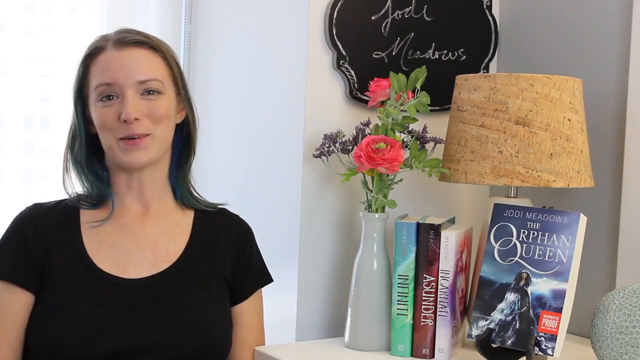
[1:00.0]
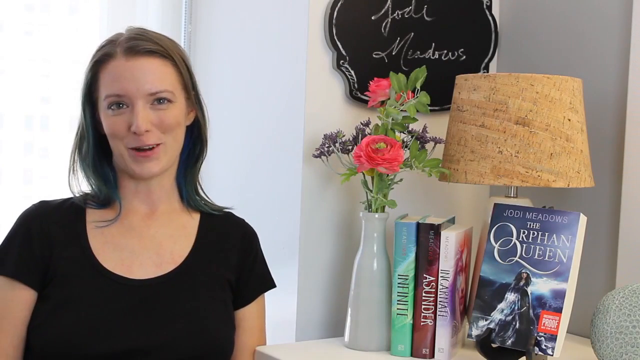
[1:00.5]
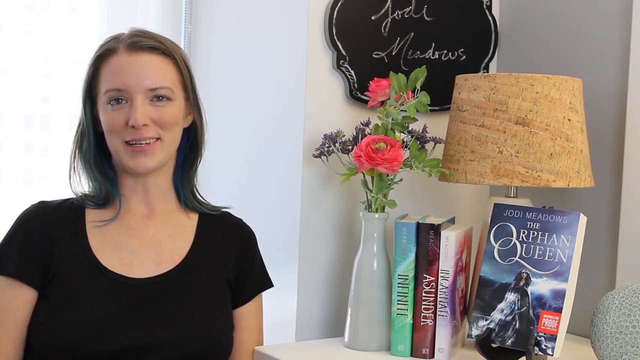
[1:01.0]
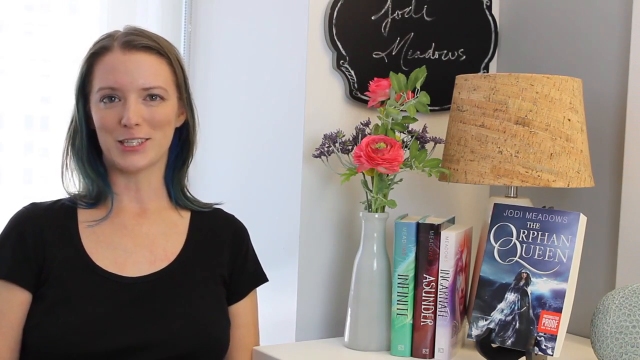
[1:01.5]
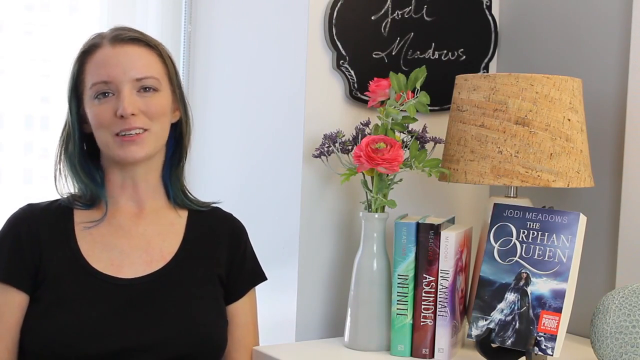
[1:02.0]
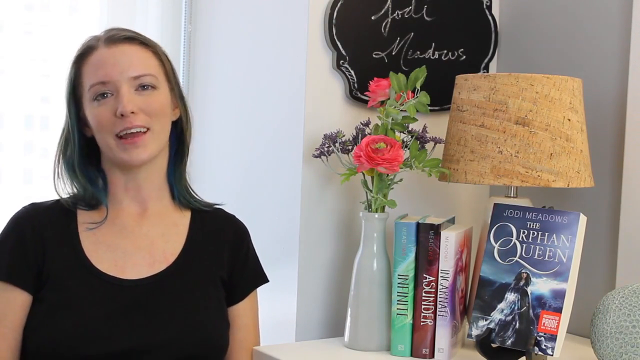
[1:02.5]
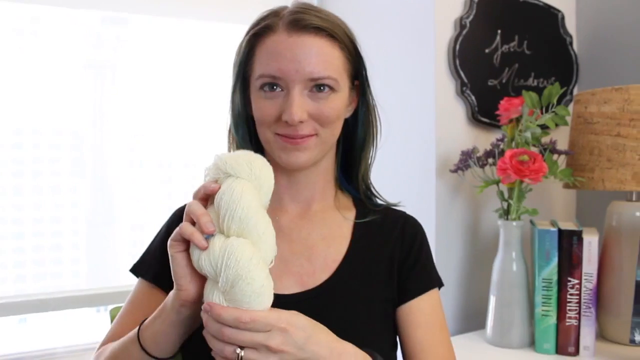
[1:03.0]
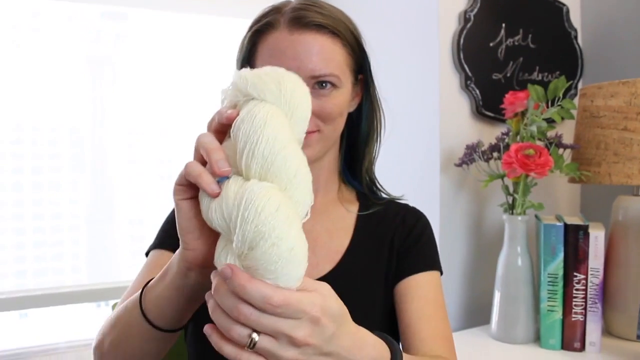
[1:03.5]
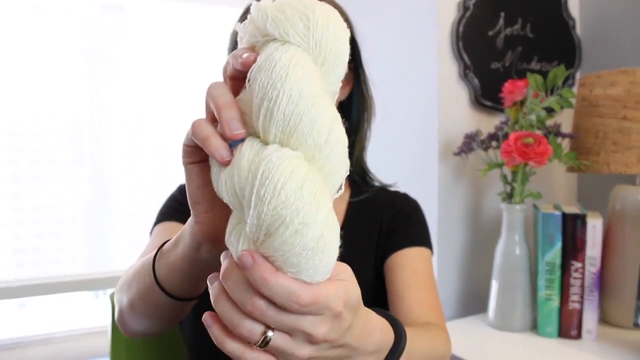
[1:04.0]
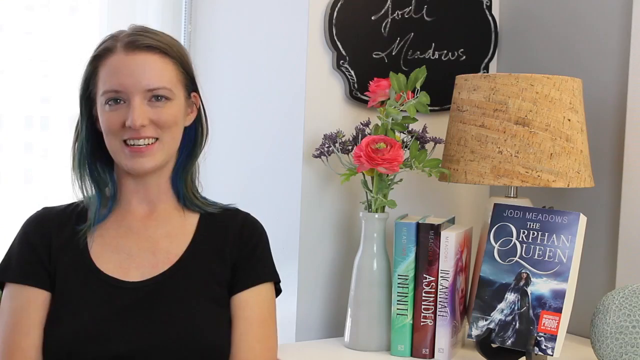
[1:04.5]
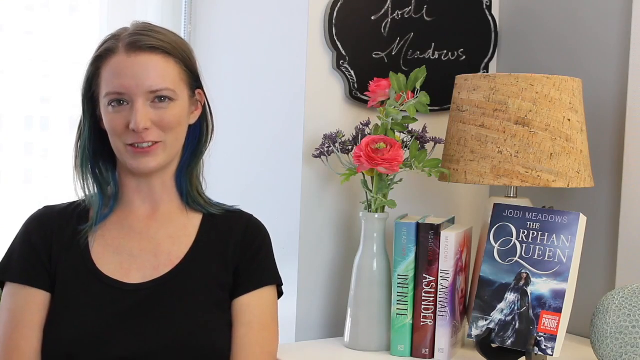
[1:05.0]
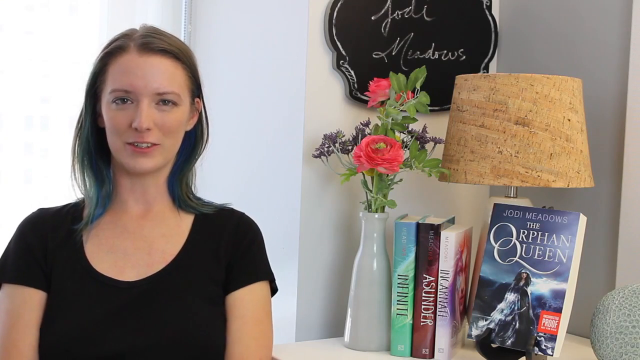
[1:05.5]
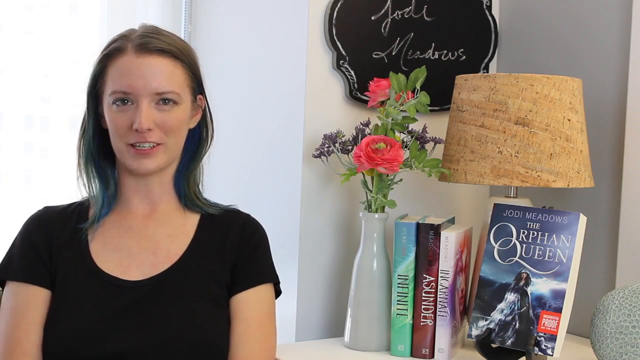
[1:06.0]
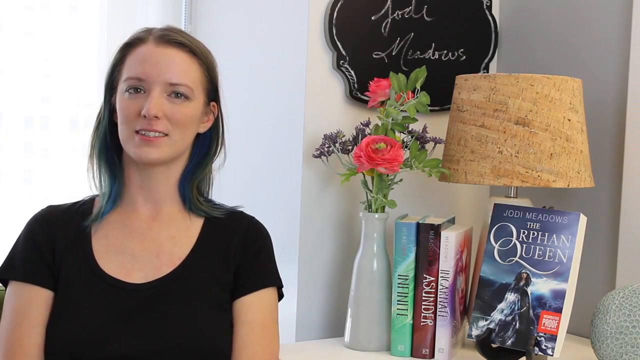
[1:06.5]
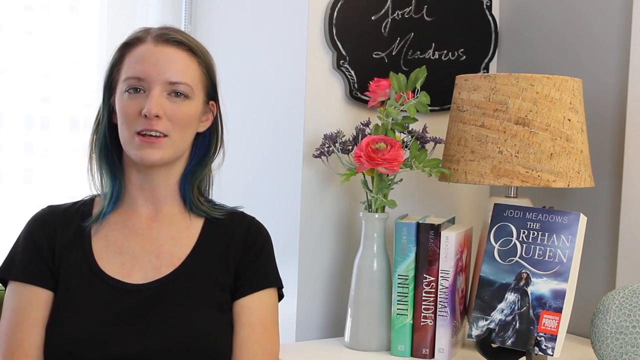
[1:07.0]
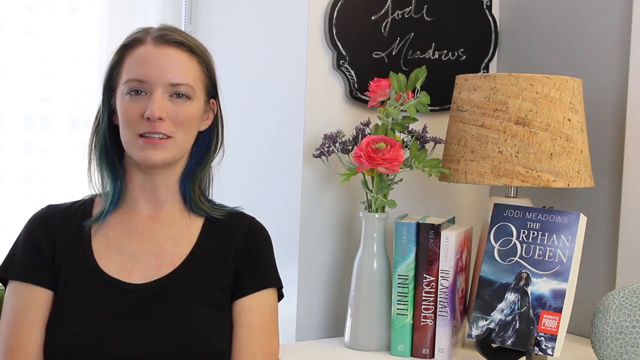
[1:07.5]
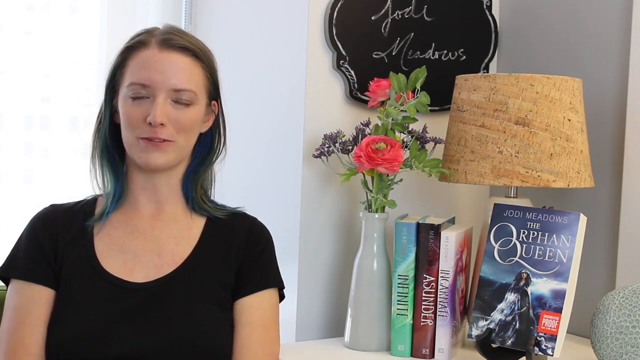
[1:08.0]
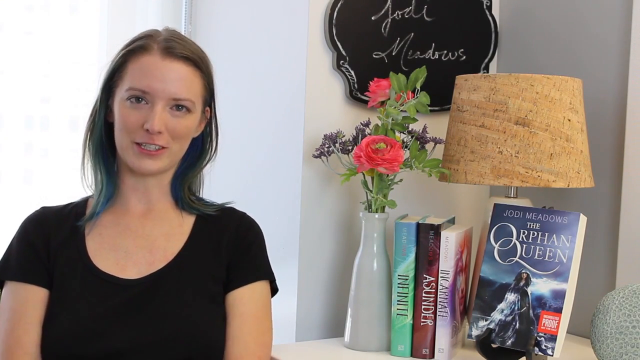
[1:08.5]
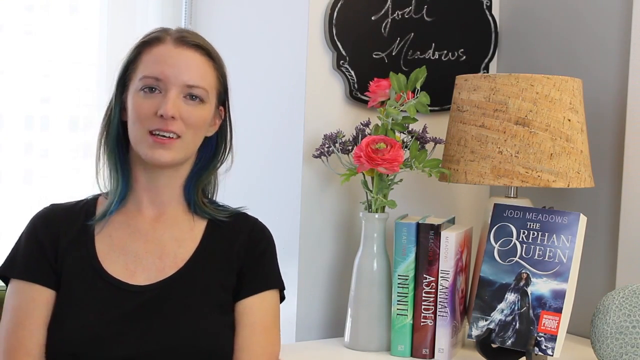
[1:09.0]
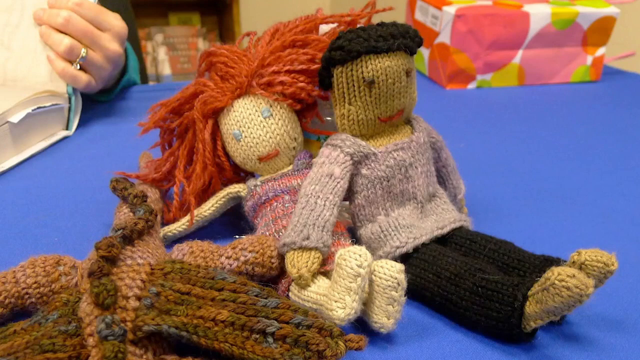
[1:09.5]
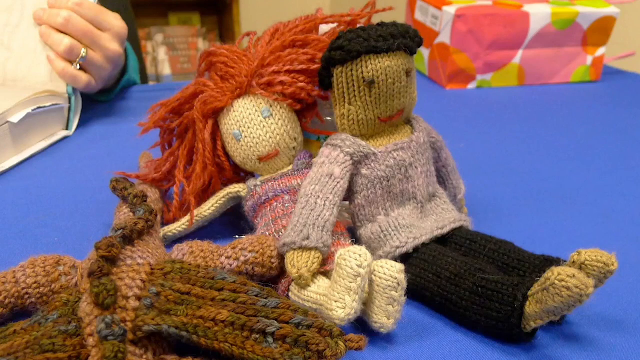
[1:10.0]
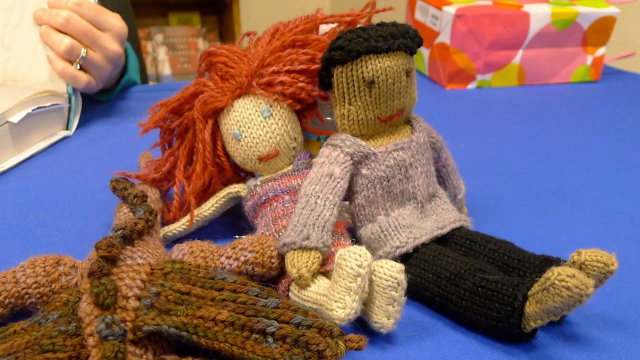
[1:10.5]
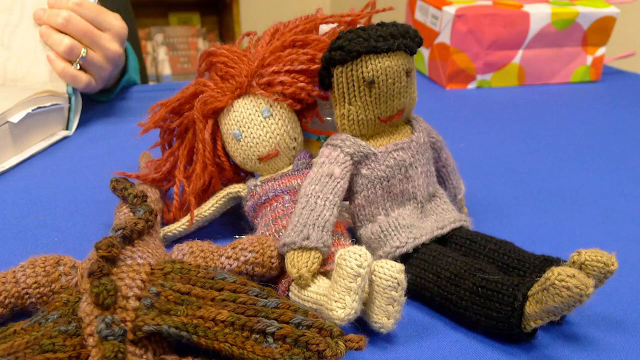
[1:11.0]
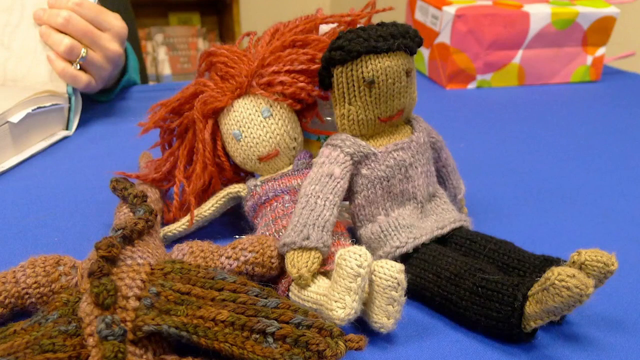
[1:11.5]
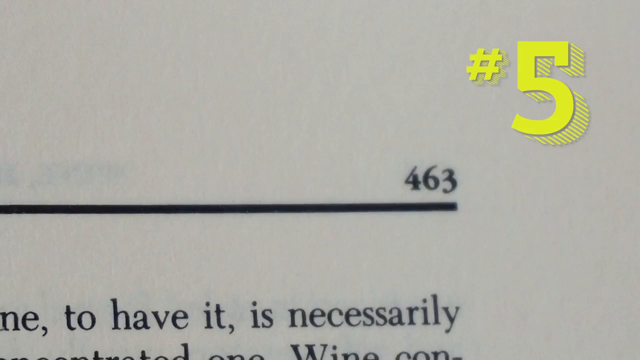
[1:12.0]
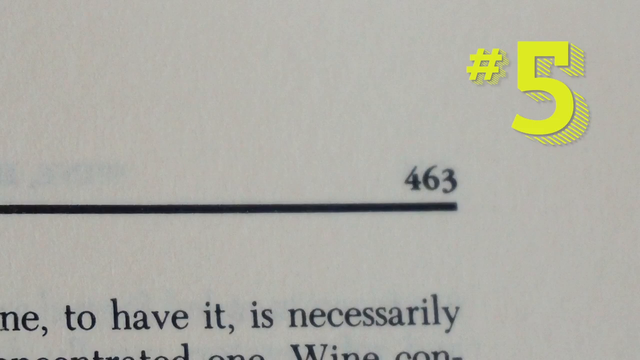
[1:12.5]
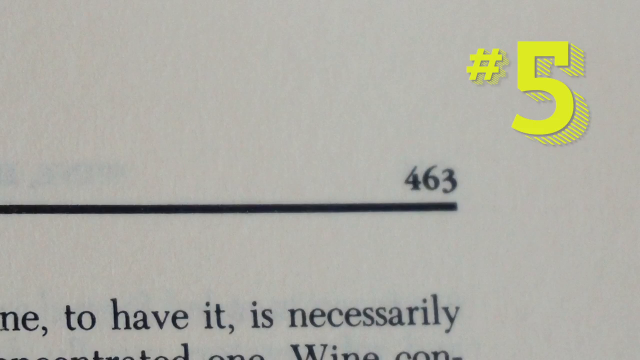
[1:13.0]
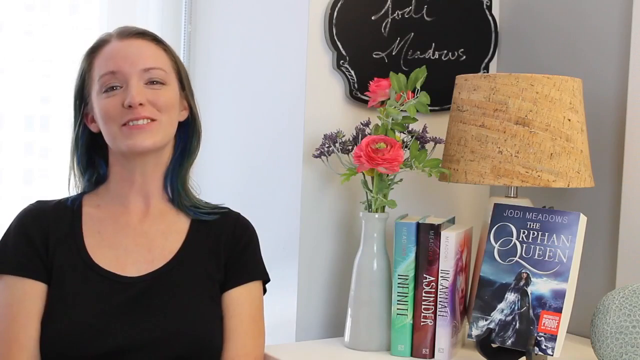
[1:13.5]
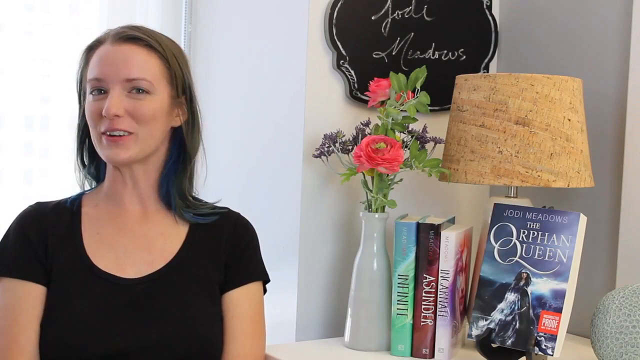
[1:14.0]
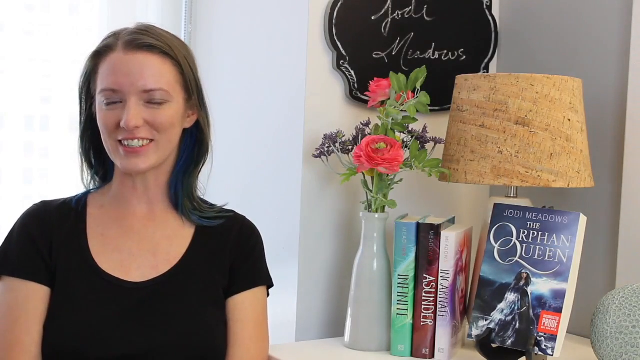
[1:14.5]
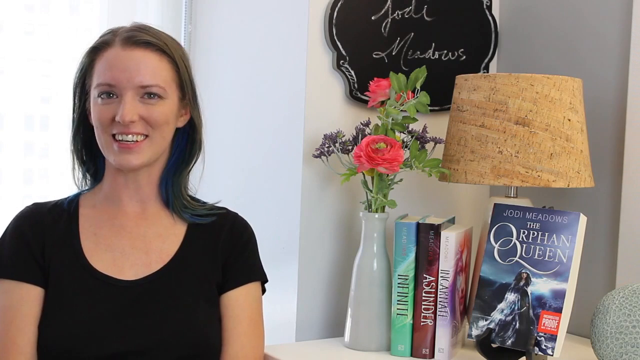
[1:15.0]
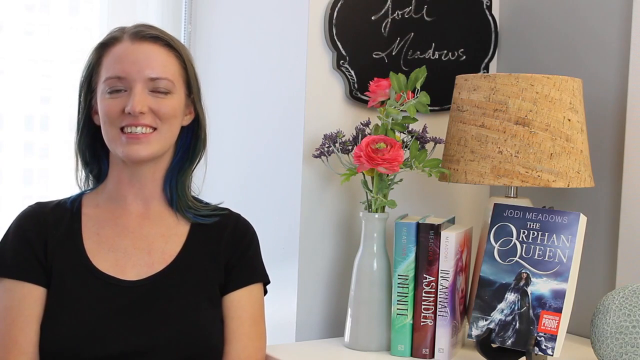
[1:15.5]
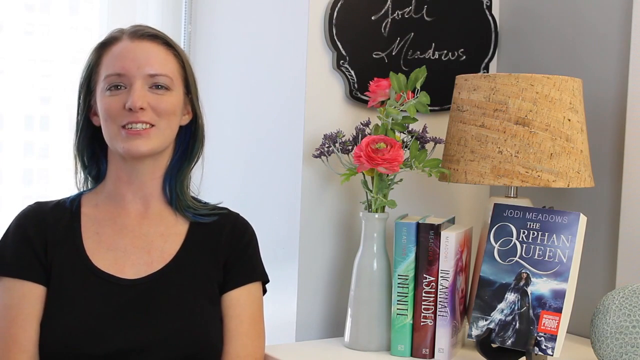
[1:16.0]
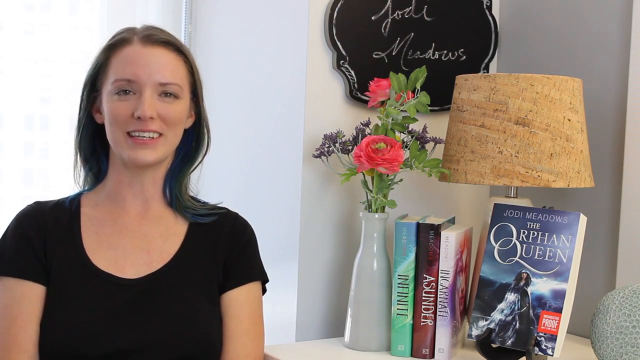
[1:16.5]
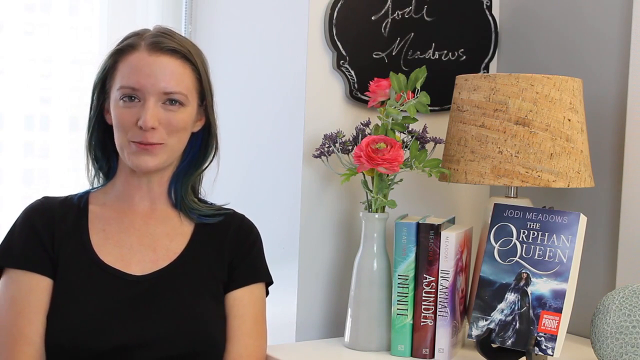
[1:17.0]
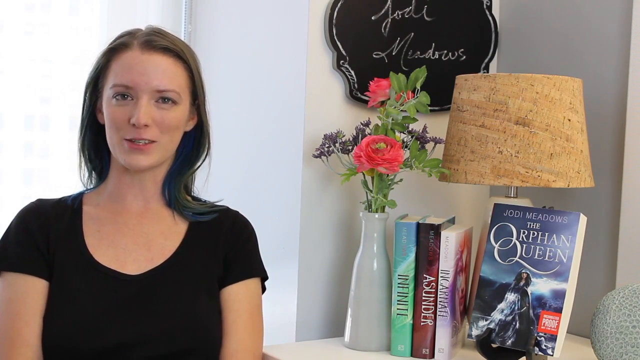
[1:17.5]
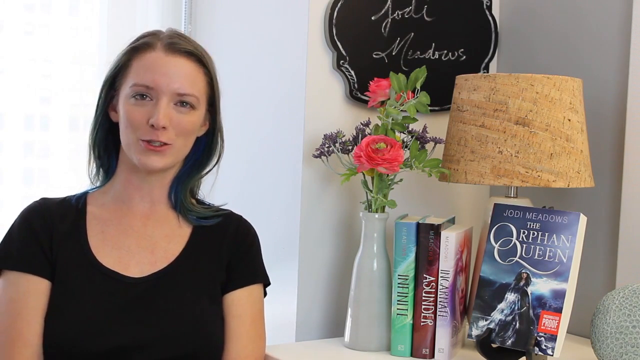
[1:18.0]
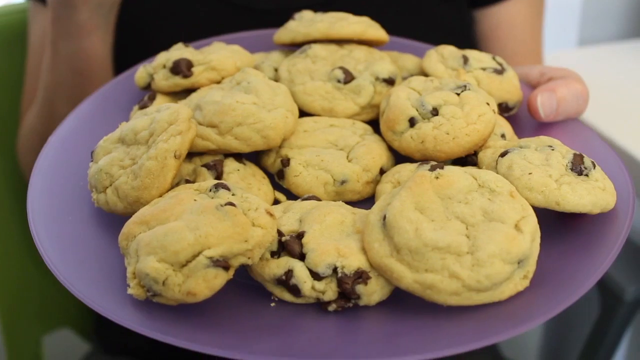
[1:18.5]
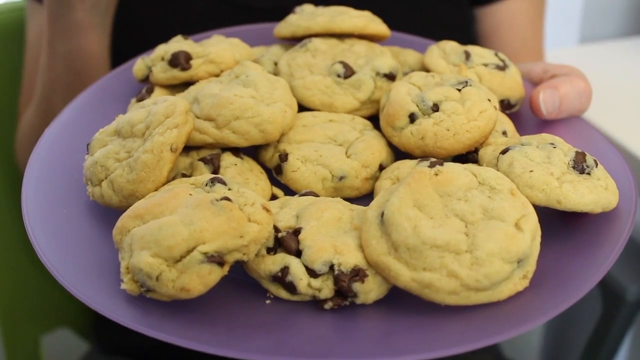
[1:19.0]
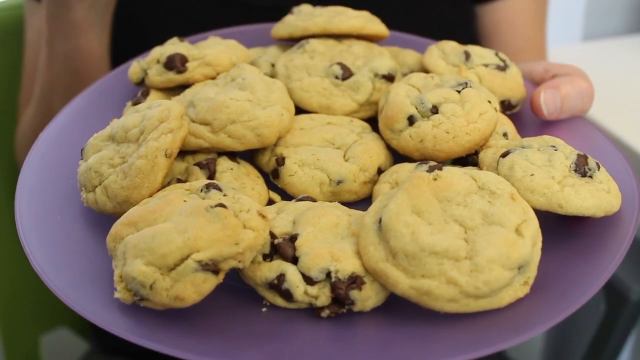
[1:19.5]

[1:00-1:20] A woman sits next to a bookshelf, wearing a short-sleeved black shirt, with long brown hair and brown eyes. Above the bookshelf, a small blackboard hangs on the wall with the name "Jodi Meadows" written on it in white chalk. The bookshelf has a small lamp and a vase with pink flowers in it, and one of the books, The Orphan Queen by Jodi Meadows, is turned toward the camera. The woman holds up a small white clump of fabric toward the camera and then resumes talking. The video cuts to a close-up of three ragdolls: the first, on the right, wears a grey shirt and black pants and has short black hair; the second wears a purple and red dress and has long red hair; and the third appears to be a sock animal of some kind. Next is a close-up of page 463 of a book, with a yellow number five superimposed above it. The video cuts back to the woman by the bookshelf, who smiles and keeps speaking, and then to a purple plate of chocolate chip cookies.